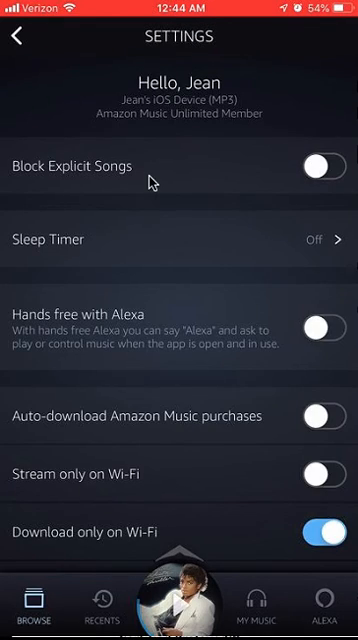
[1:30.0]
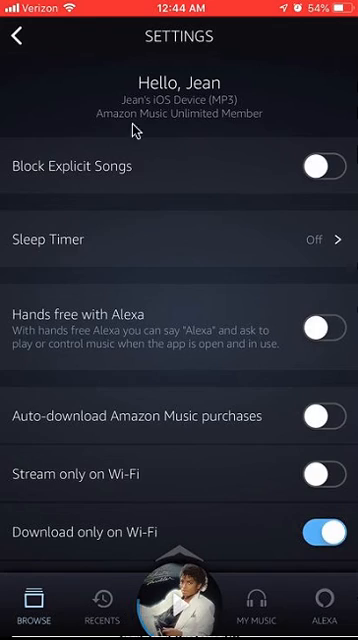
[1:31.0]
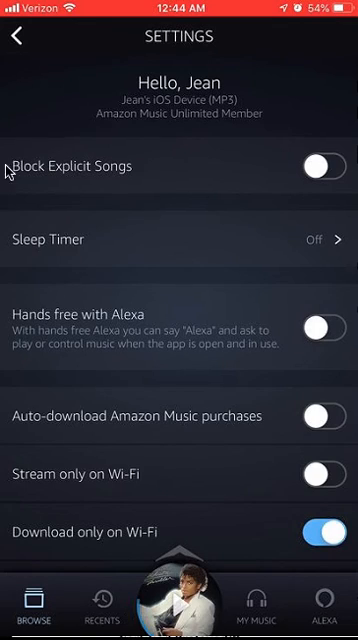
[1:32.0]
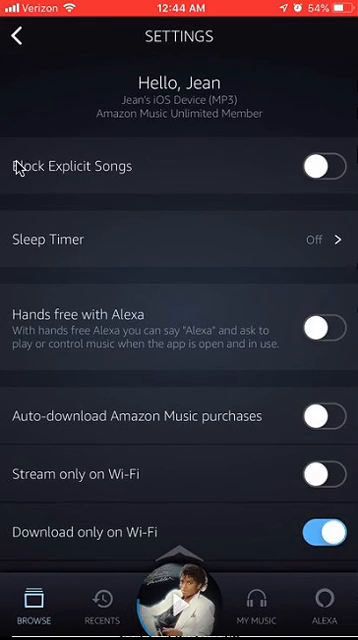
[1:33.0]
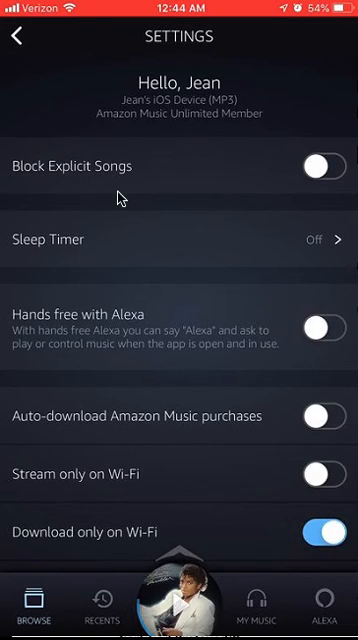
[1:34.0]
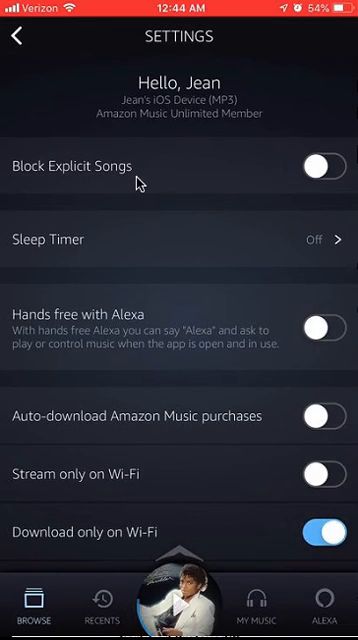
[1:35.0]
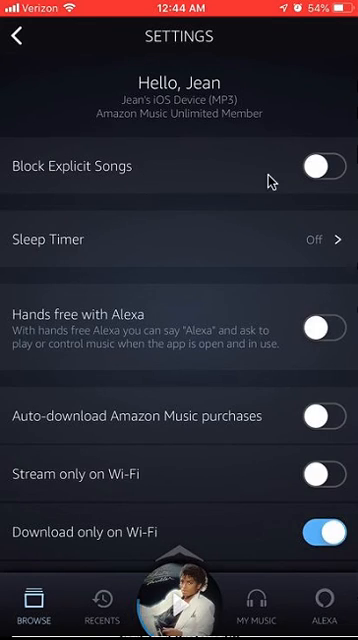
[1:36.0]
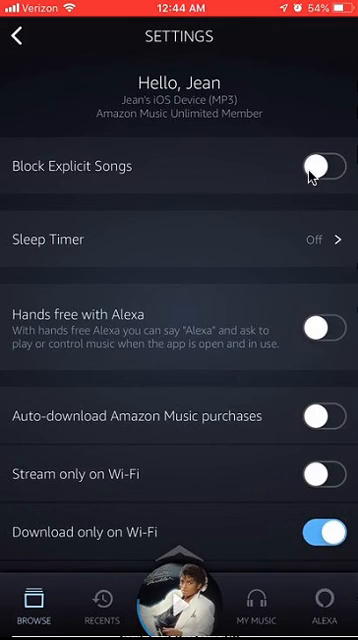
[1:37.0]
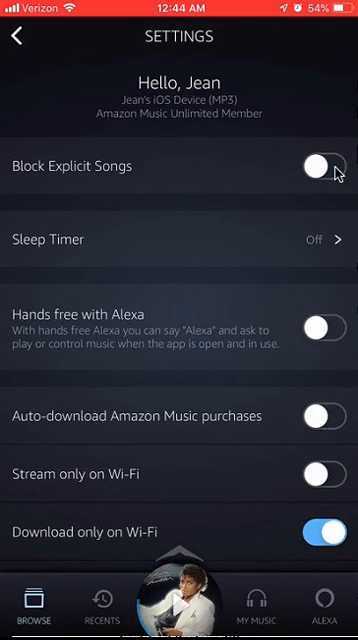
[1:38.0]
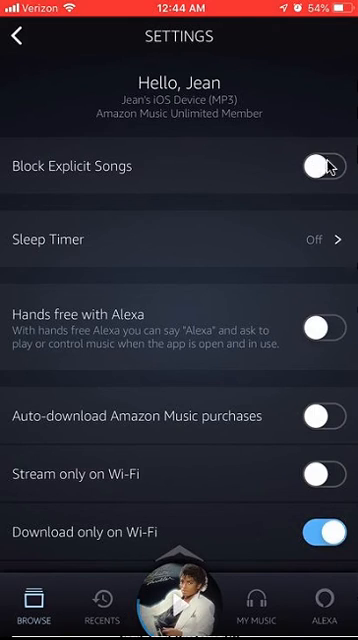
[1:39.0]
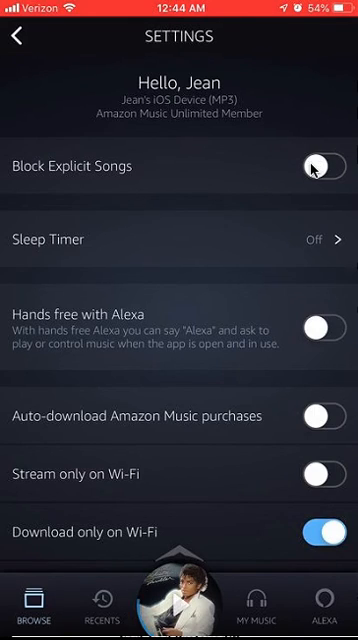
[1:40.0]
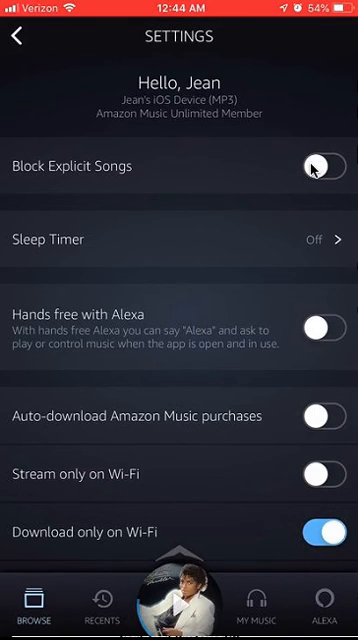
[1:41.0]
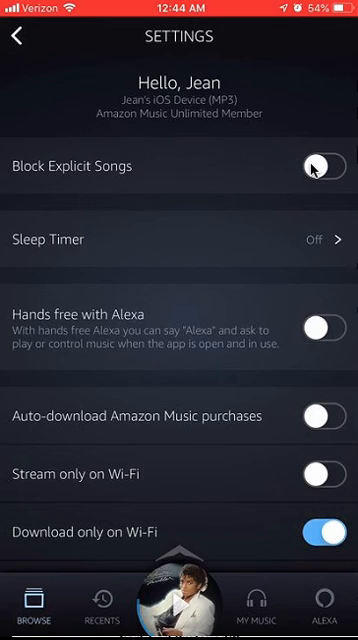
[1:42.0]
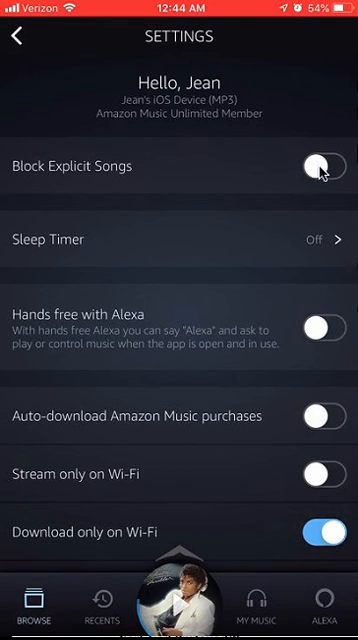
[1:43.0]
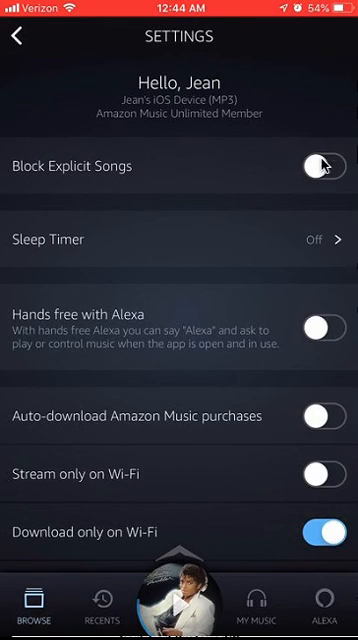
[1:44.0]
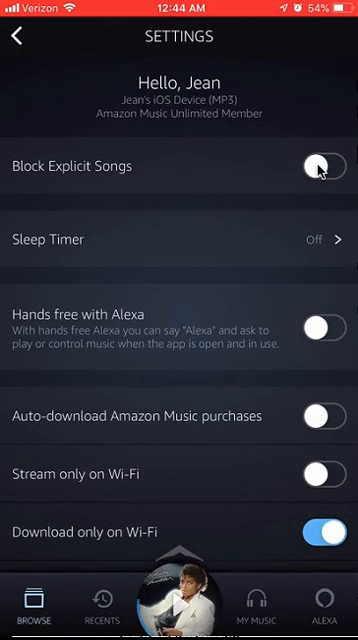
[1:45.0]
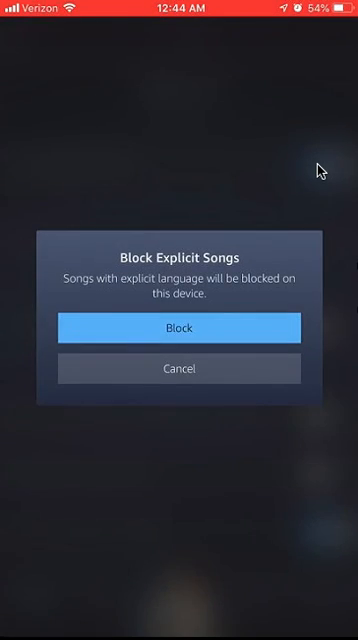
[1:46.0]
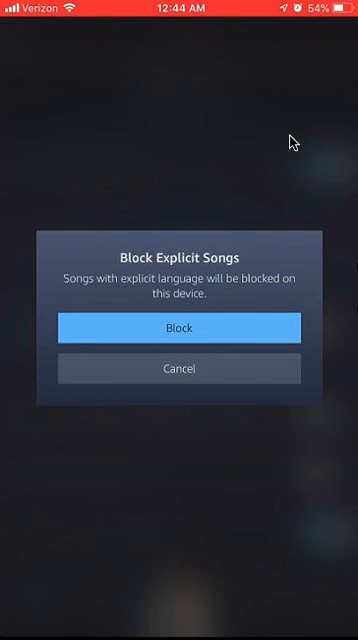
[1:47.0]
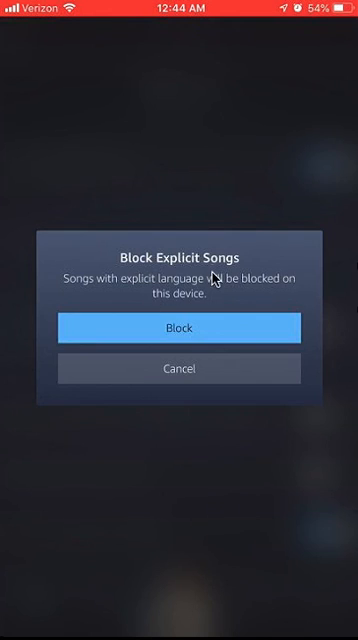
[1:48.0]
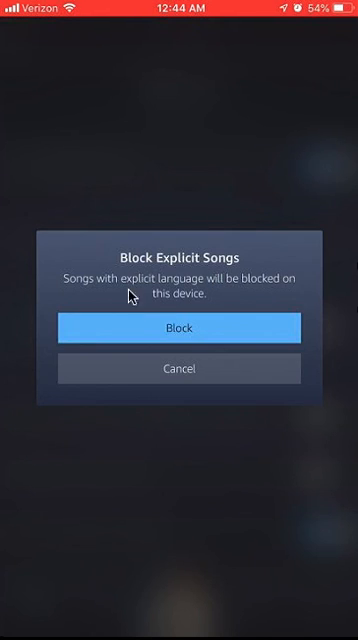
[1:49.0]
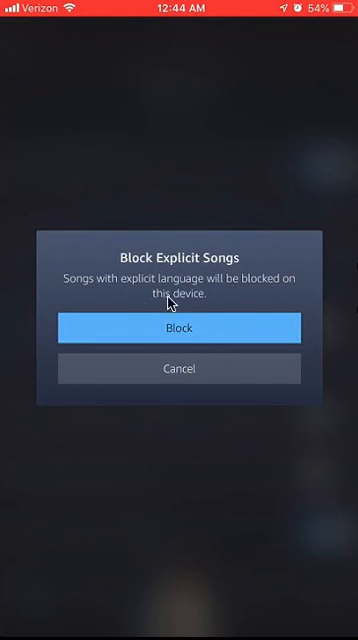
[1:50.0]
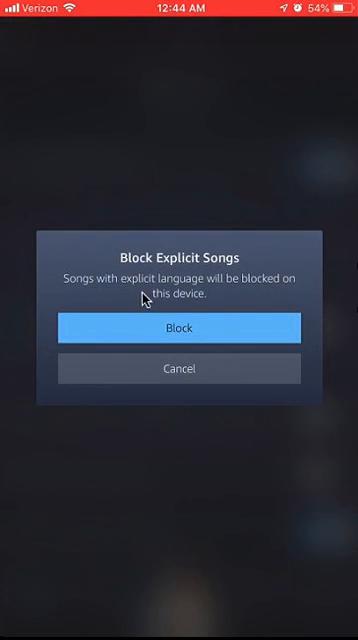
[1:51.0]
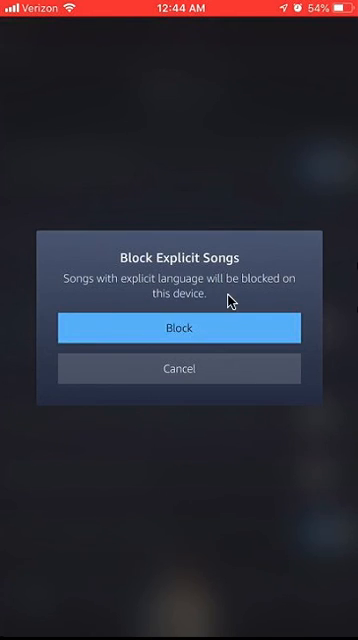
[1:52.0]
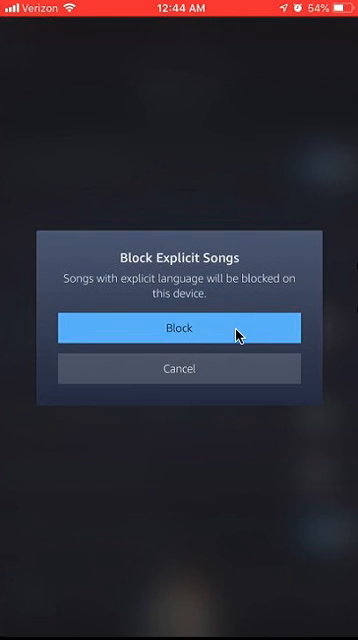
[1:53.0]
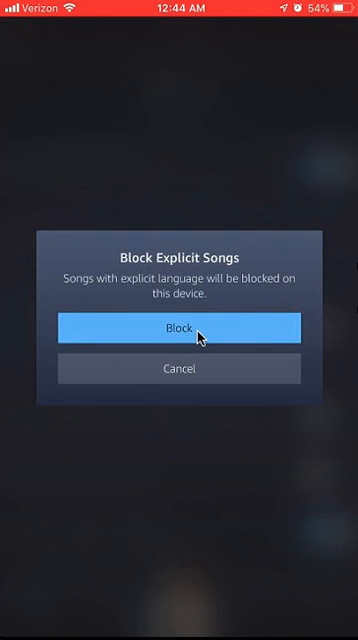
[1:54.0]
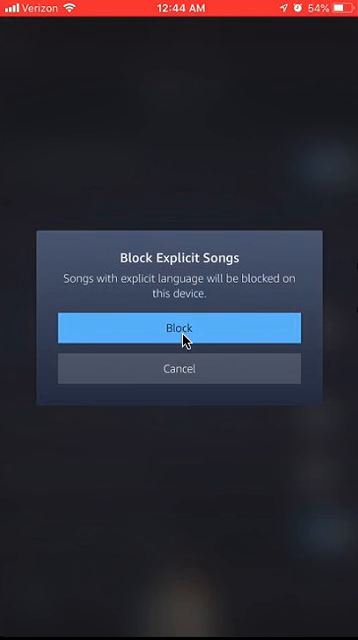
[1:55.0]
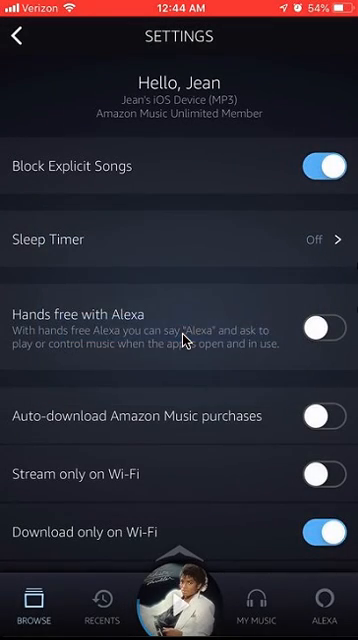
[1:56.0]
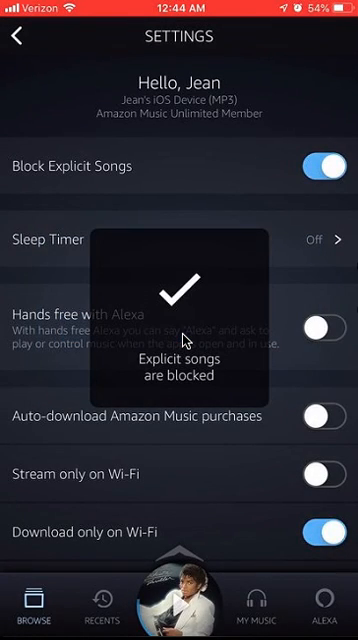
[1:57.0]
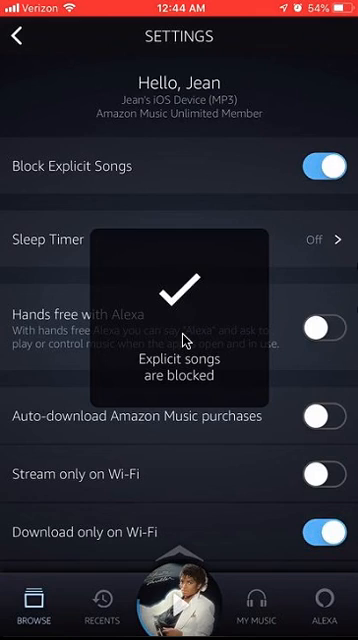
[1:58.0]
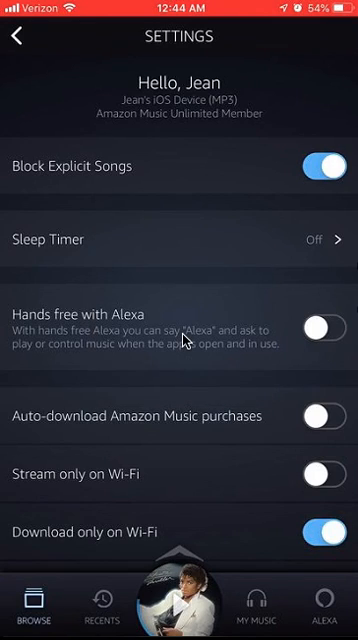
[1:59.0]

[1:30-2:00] The user is on the settings tab, which reads "hello Gene", "Gene's iOS device" and "Amazon Music unlimited member". Options include block explicit songs, set a timer, hands-free with Alexa, auto download Amazon Music purchases, stream only on Wi-Fi, and download only on Wi-Fi. He focuses on block explicit songs, whose control is white, and clicks it. A pop-up reads "block explicit songs" and "song with explicit language will be blocked on this device", with block highlighted in blue and an option to cancel. He apparently clicks block, the block explicit songs setting turns blue, and a check mark appears with a message that explicit songs are blocked.